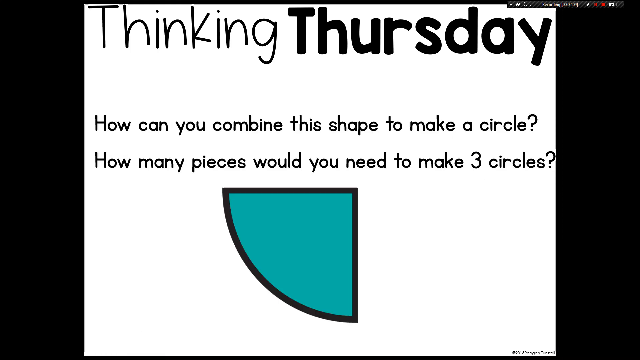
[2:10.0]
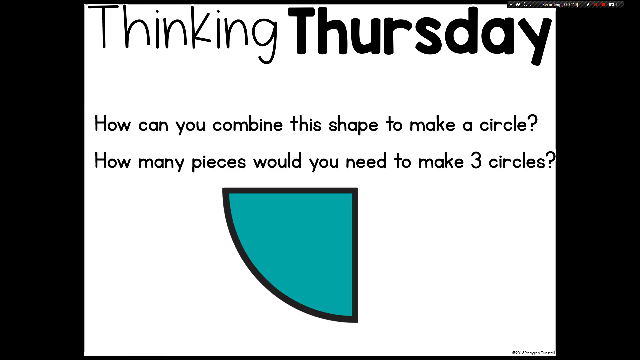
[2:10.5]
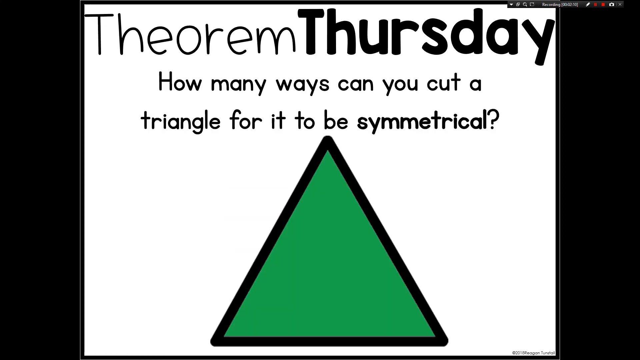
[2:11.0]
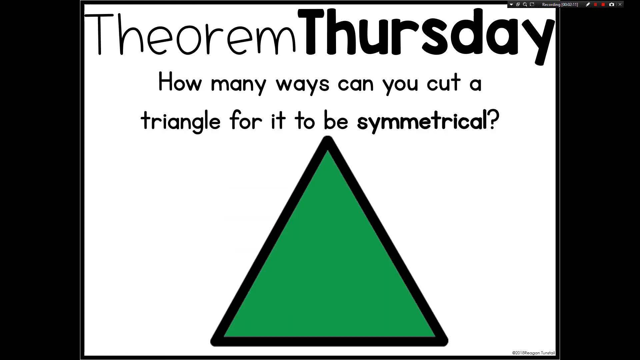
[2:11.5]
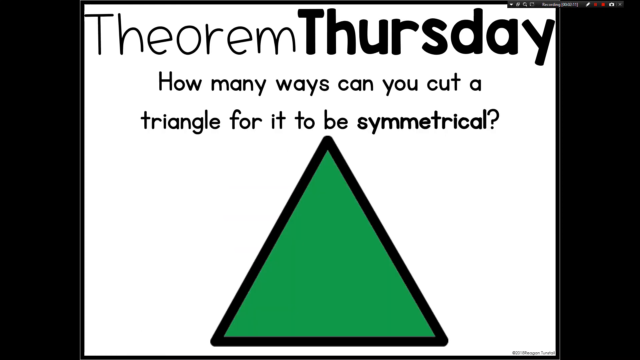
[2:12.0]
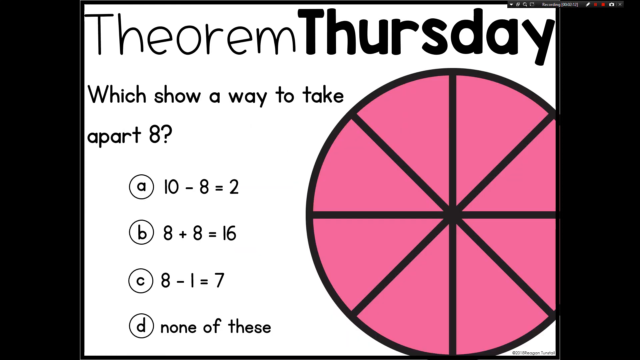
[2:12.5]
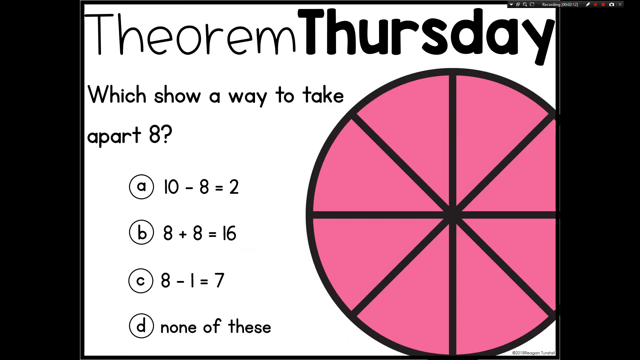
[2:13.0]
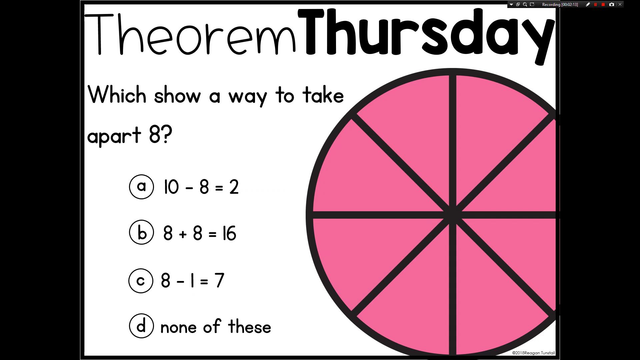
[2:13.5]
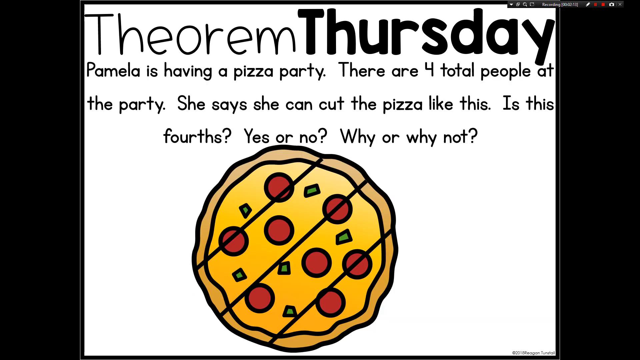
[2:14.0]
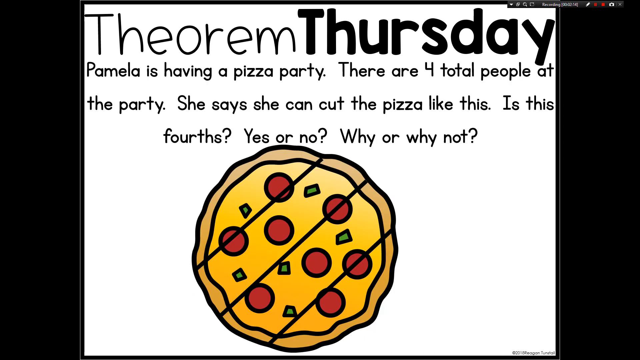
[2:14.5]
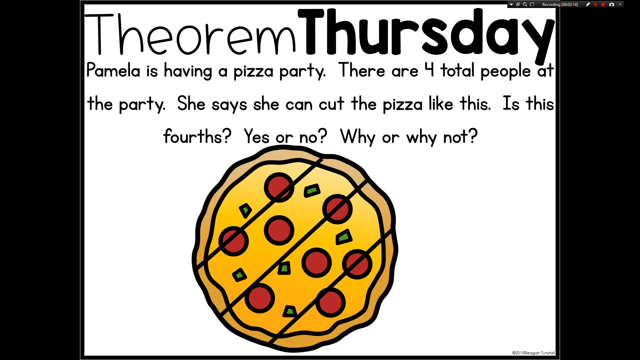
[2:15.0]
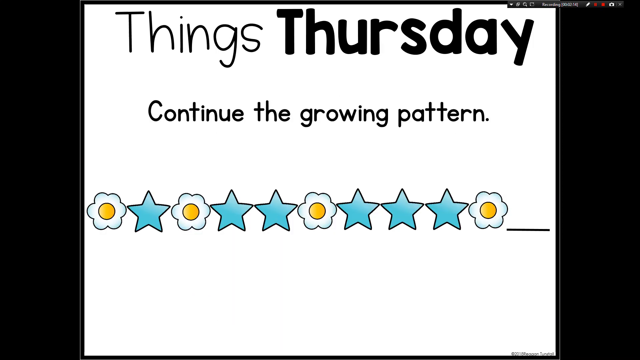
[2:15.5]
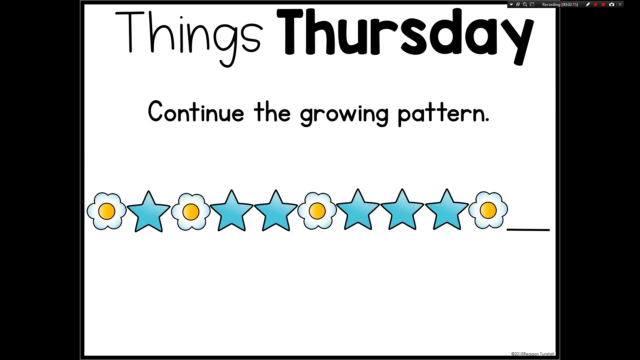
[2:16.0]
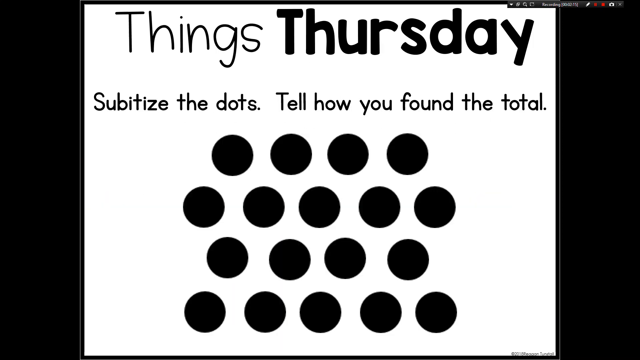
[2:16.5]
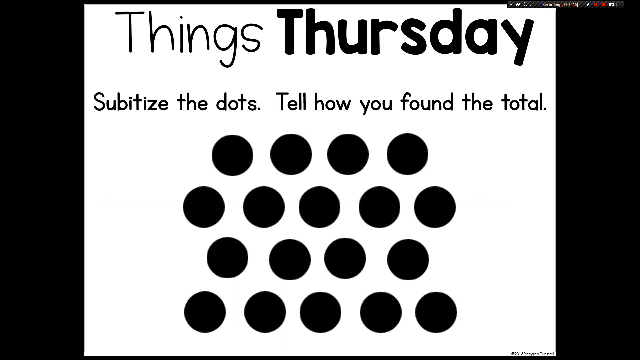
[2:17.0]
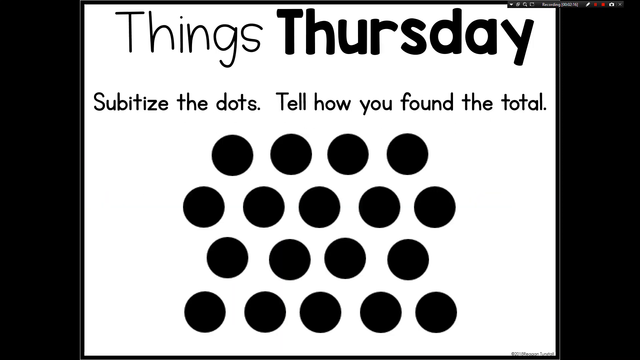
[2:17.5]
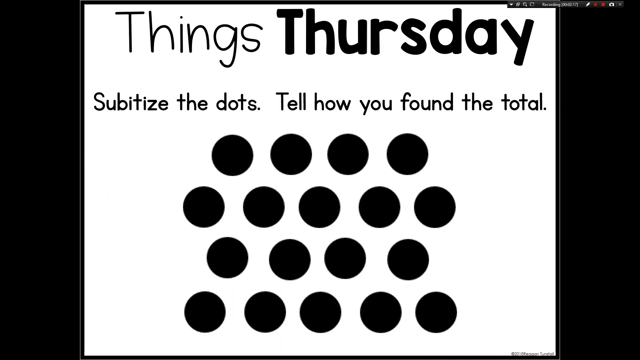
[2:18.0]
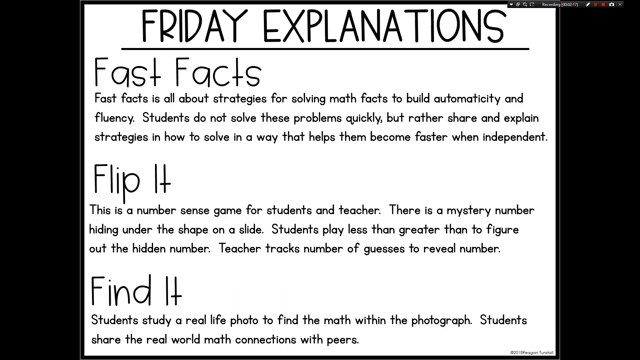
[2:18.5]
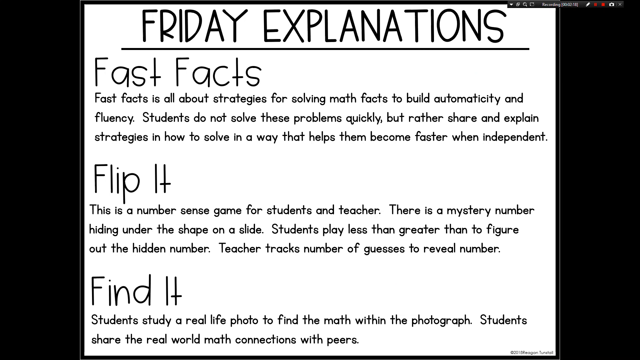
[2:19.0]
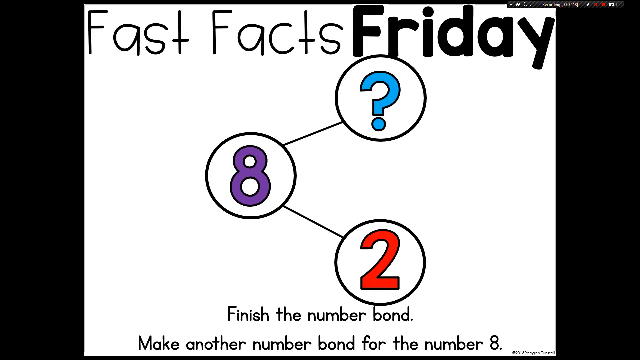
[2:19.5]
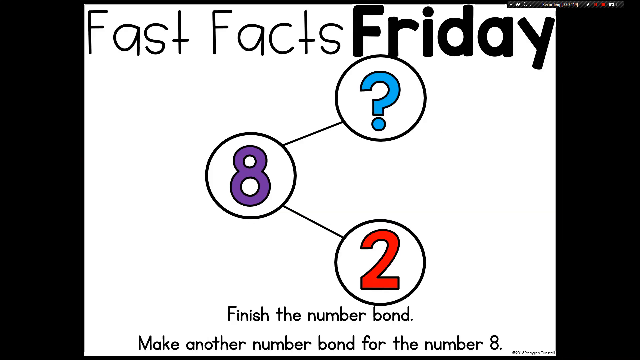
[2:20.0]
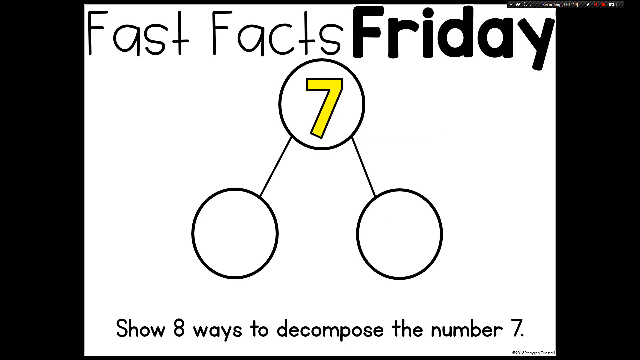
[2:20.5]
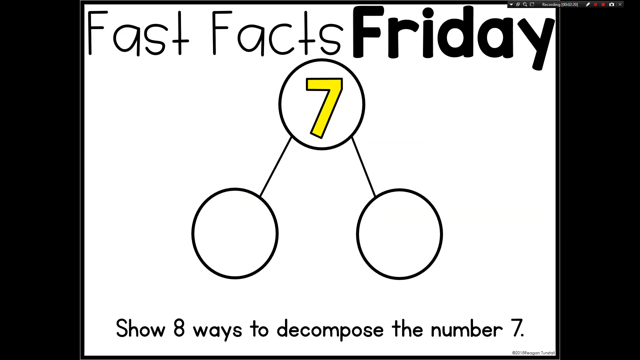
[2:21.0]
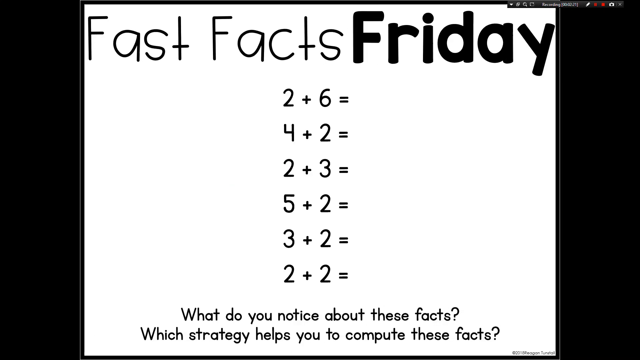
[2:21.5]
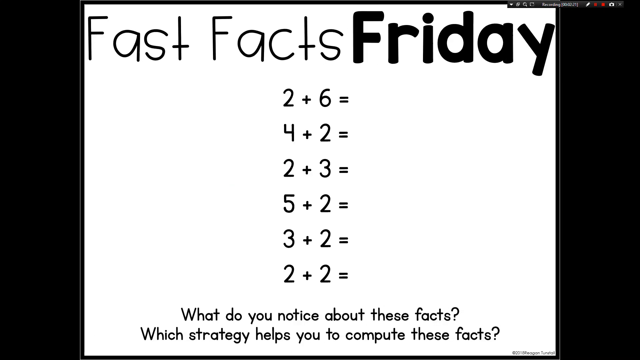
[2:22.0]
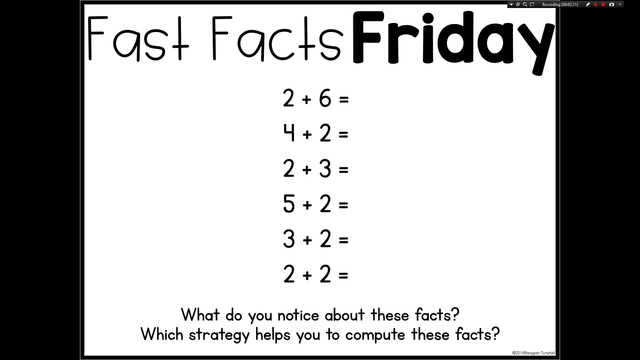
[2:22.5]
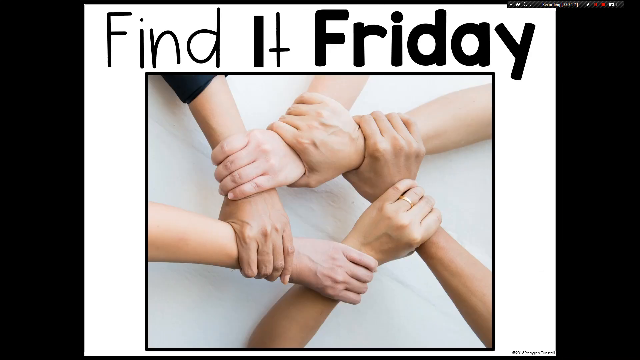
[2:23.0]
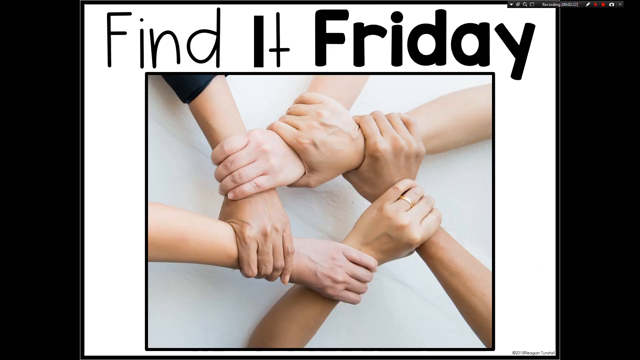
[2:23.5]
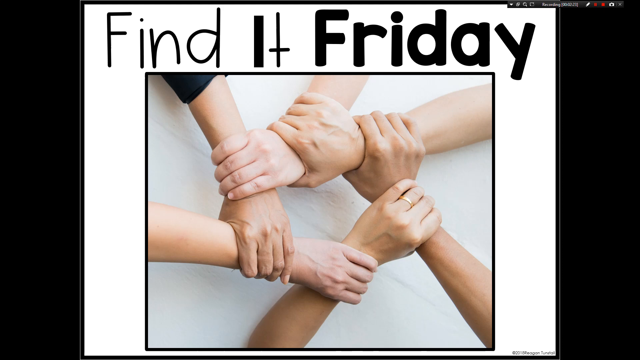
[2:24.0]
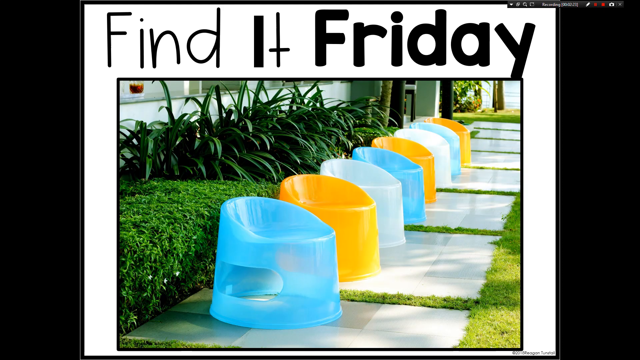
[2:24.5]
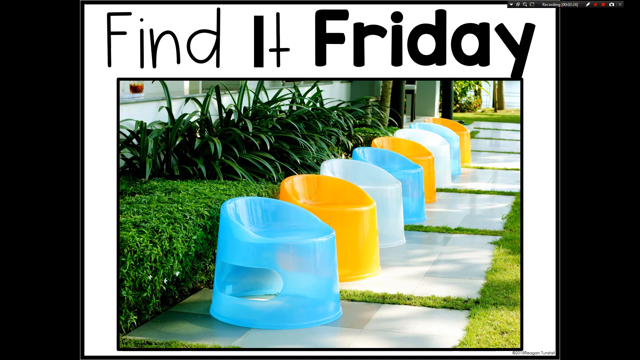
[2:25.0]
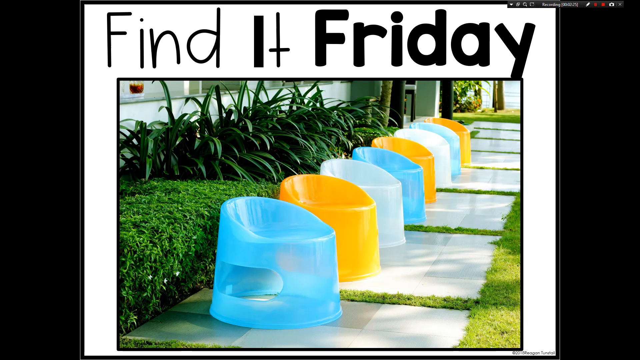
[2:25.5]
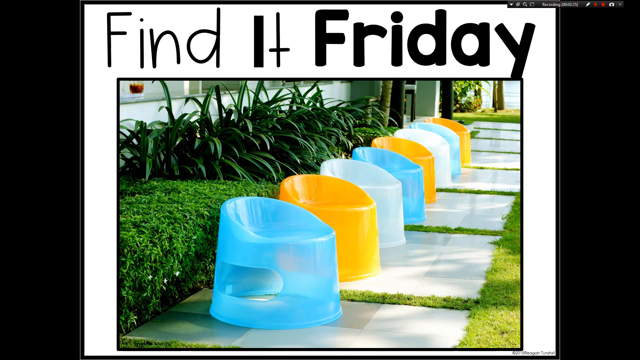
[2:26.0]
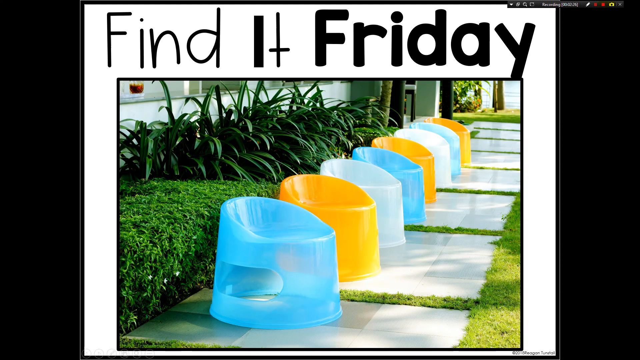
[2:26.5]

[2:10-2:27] A "Thinking Thursday" slide asks "can you combine the shapes to make a circle? How many pieces would you need to make three circles?" A Theorem Thursday slide asks "how many ways can you cut a triangle for it to be symmetrical?" Another question asks which shows a way to take apart eight, with options including "eight plus eight equals sixteen", "eight minus one equals seven" and "none of these". A problem reads "Pamela is having a pizza party. There are four total people at this party" and asks "Yes or no. Why or why not?" Text follows about strategies for solving math, a number sense game for students and teacher with a mystery number, and then "Find it Friday".